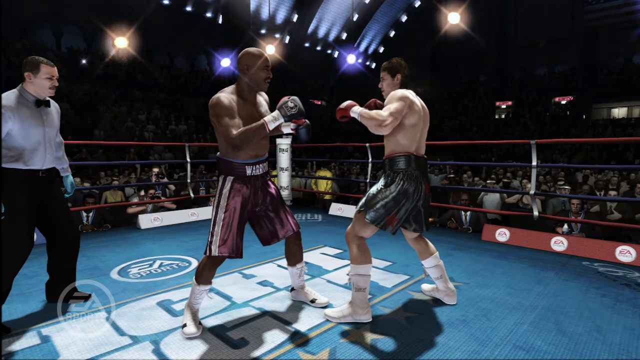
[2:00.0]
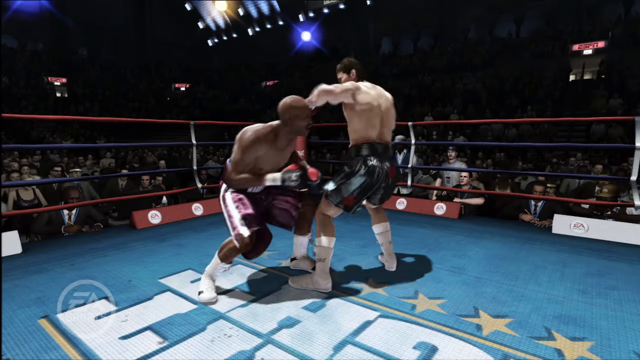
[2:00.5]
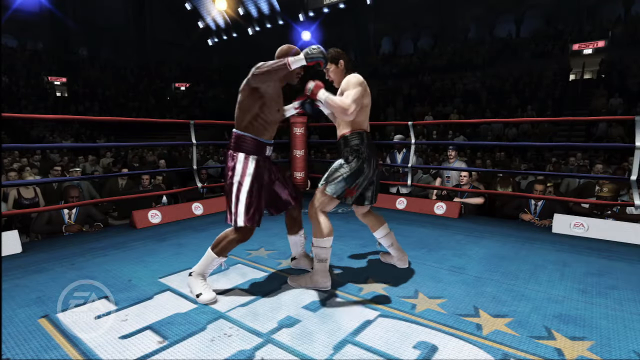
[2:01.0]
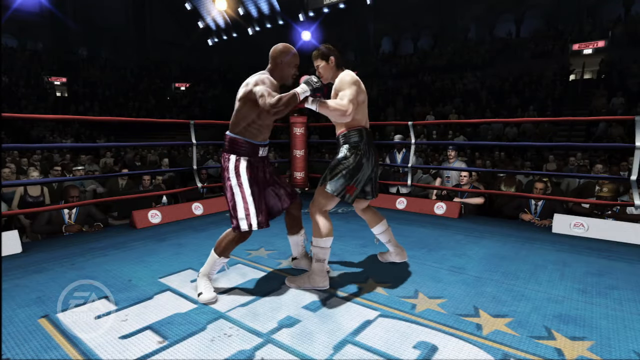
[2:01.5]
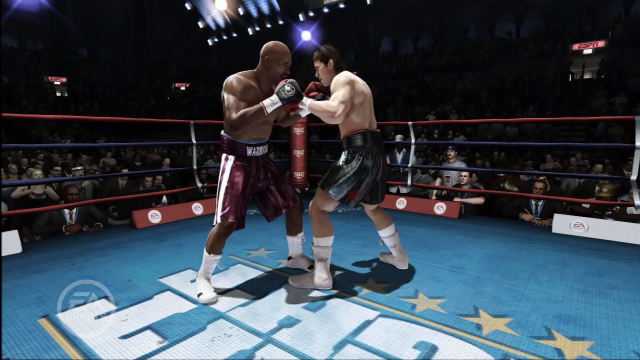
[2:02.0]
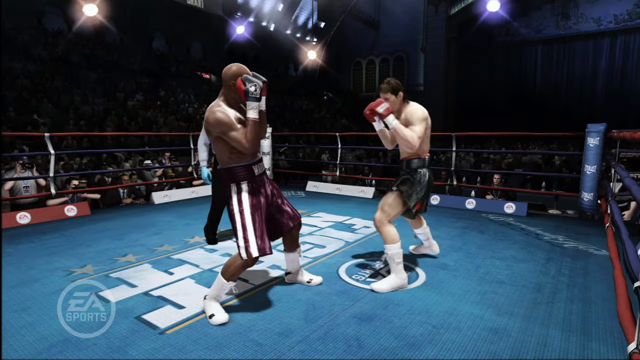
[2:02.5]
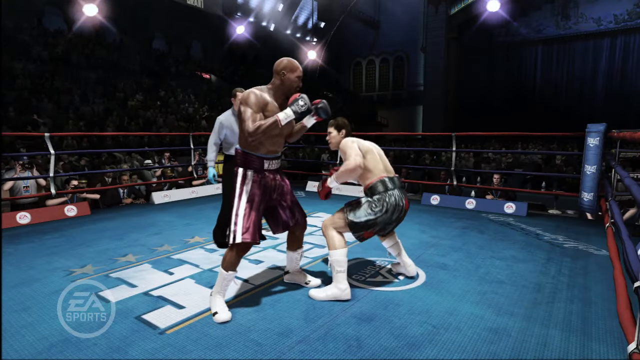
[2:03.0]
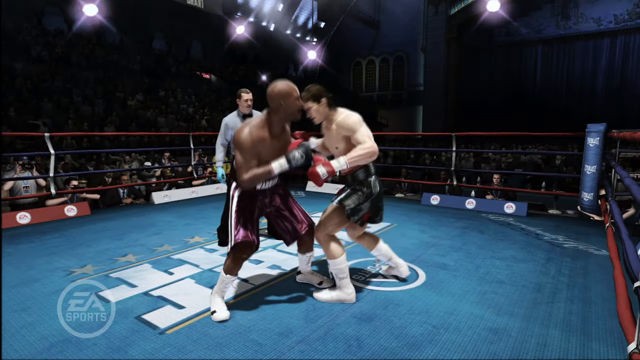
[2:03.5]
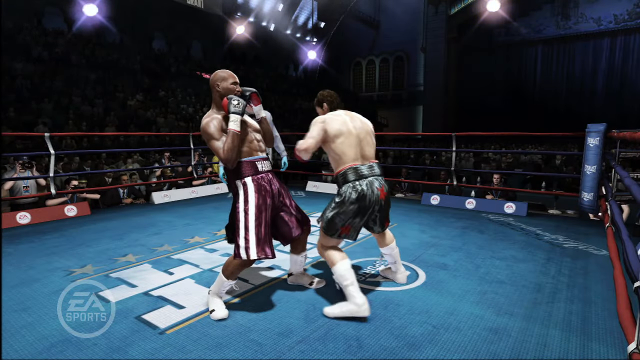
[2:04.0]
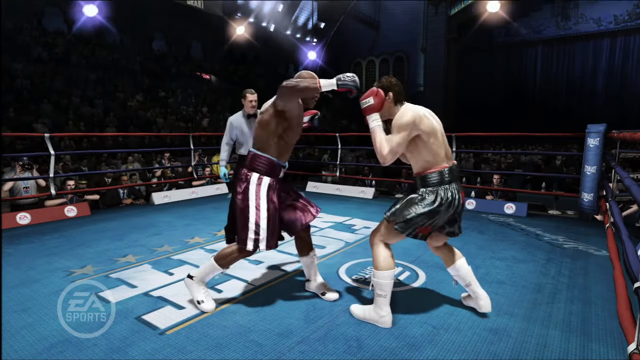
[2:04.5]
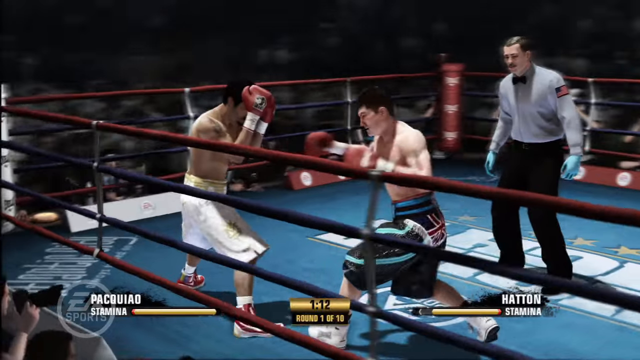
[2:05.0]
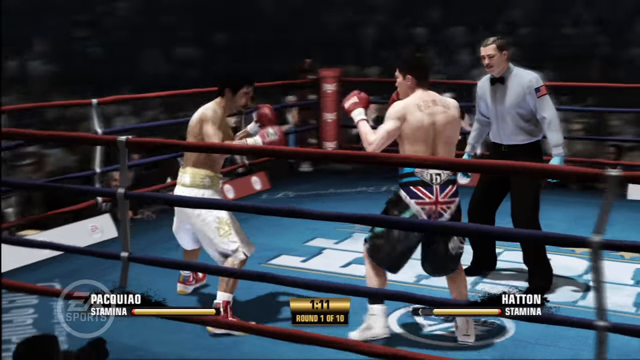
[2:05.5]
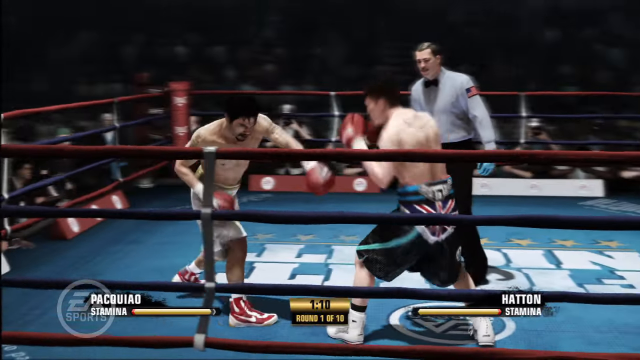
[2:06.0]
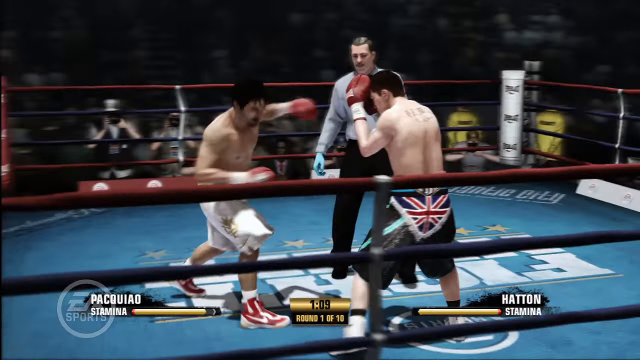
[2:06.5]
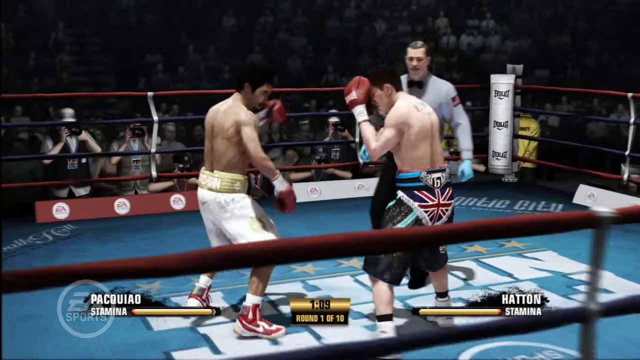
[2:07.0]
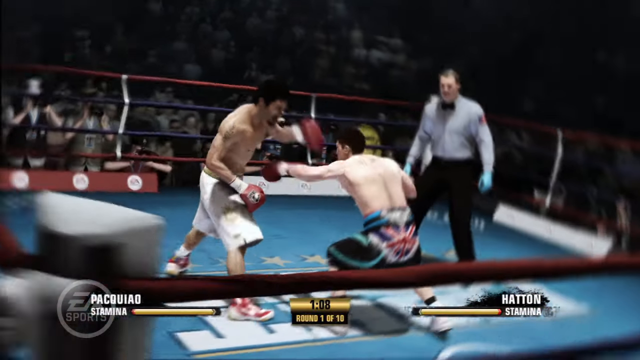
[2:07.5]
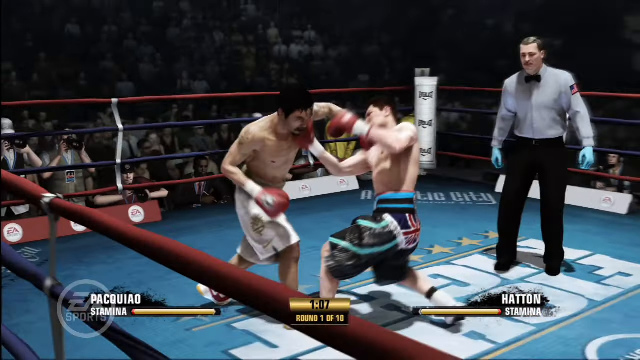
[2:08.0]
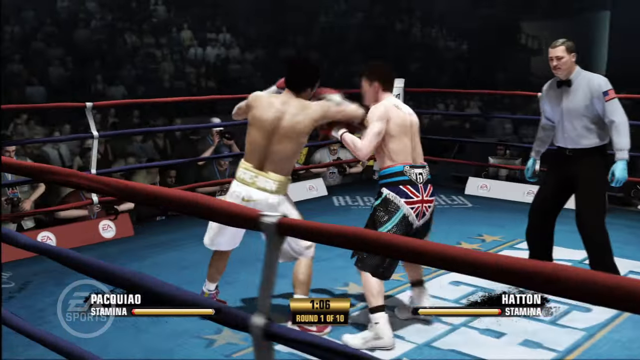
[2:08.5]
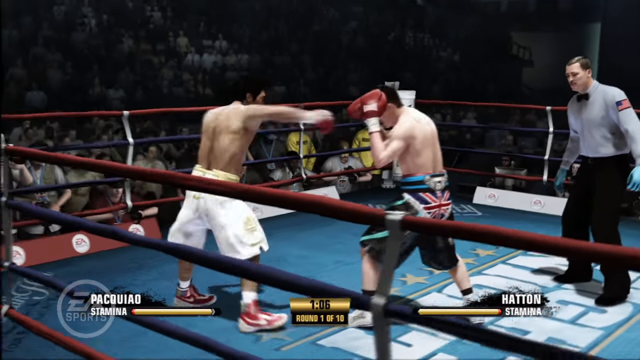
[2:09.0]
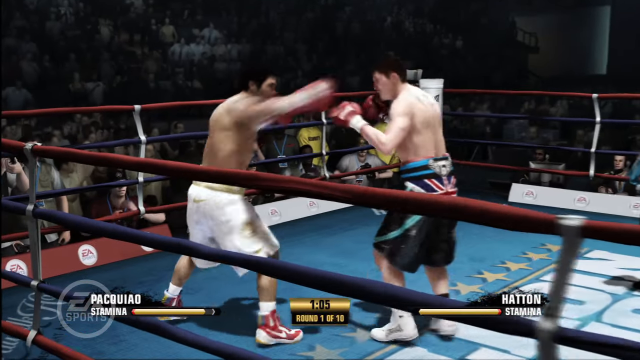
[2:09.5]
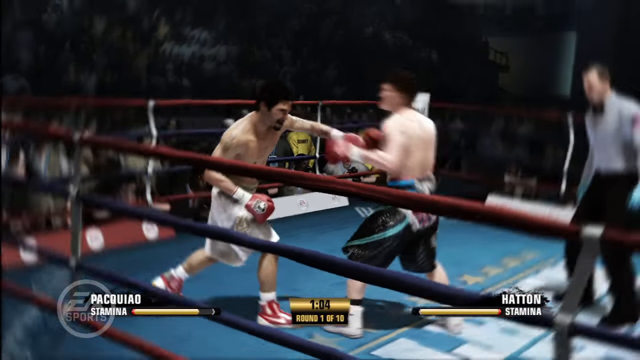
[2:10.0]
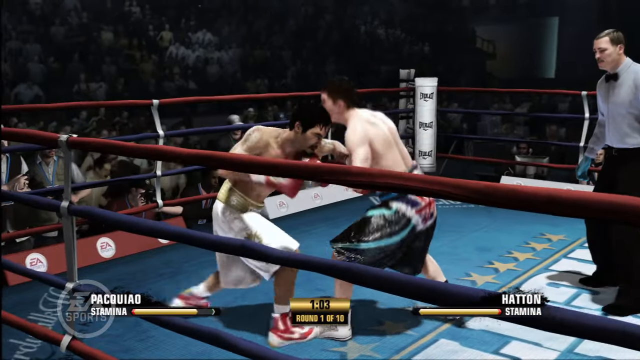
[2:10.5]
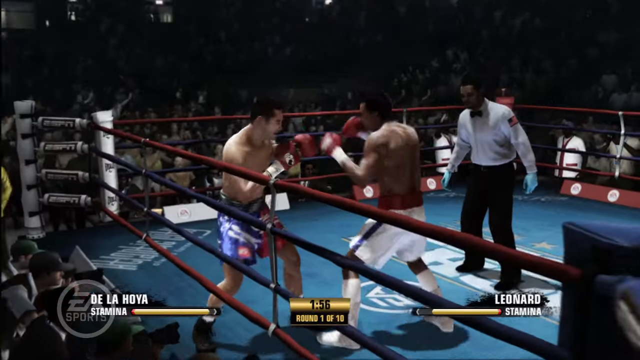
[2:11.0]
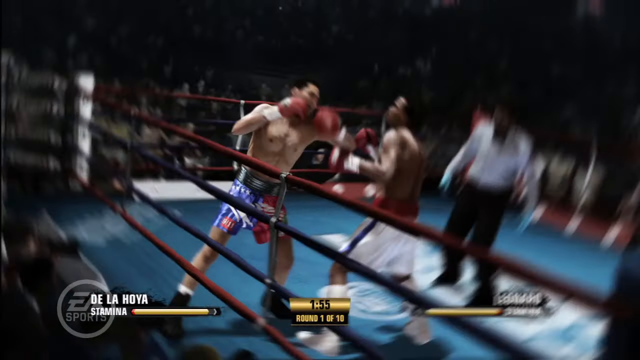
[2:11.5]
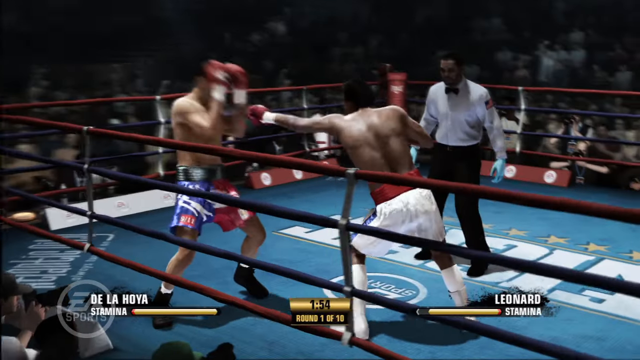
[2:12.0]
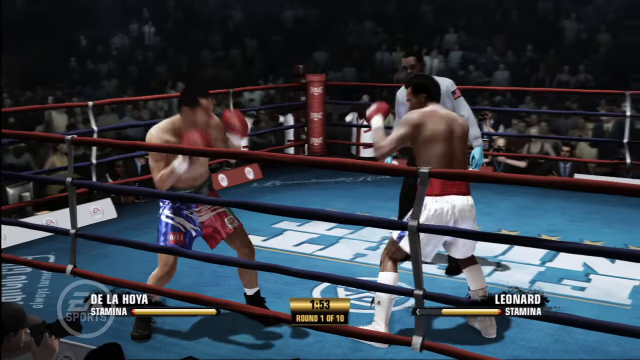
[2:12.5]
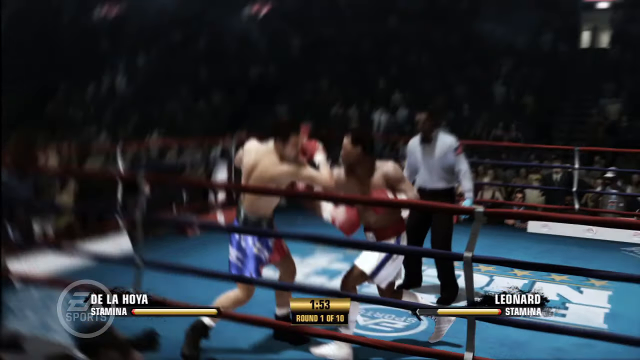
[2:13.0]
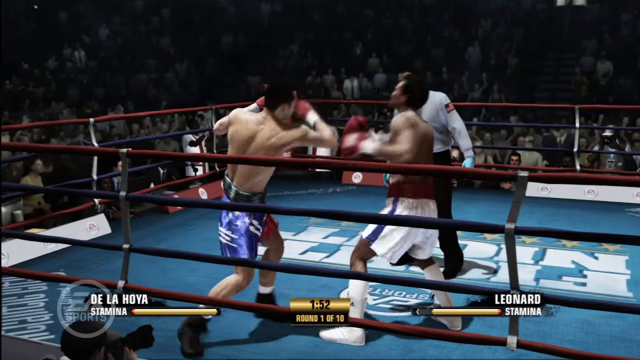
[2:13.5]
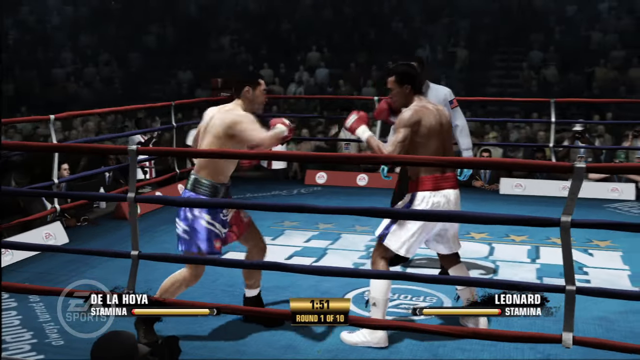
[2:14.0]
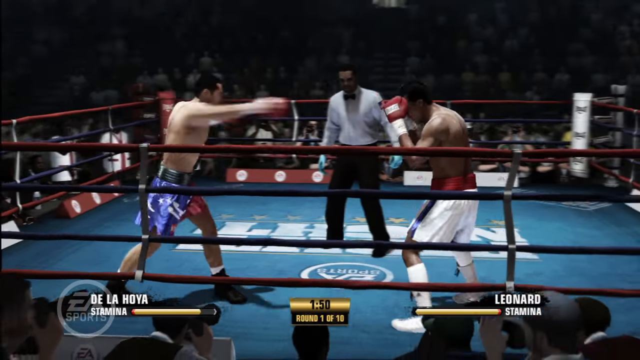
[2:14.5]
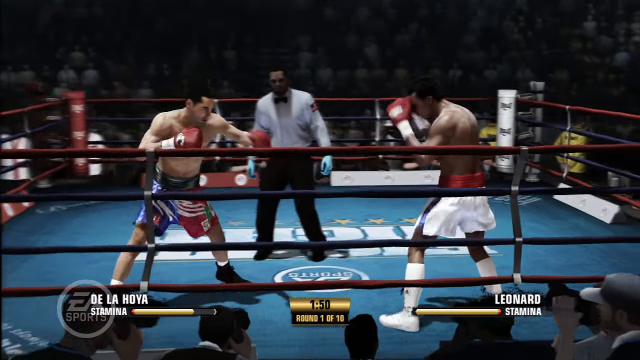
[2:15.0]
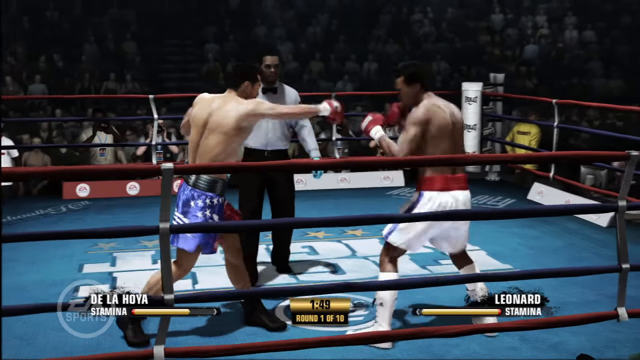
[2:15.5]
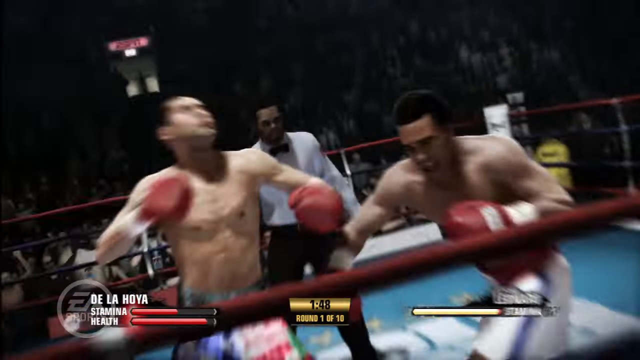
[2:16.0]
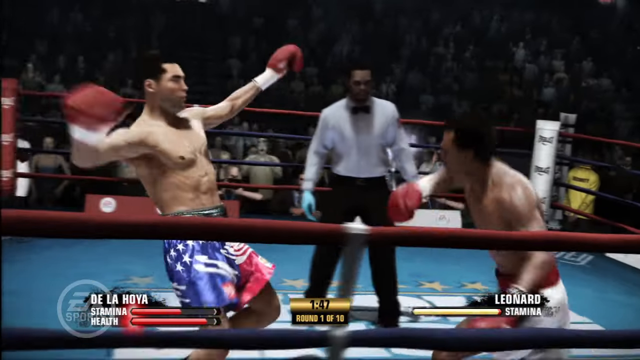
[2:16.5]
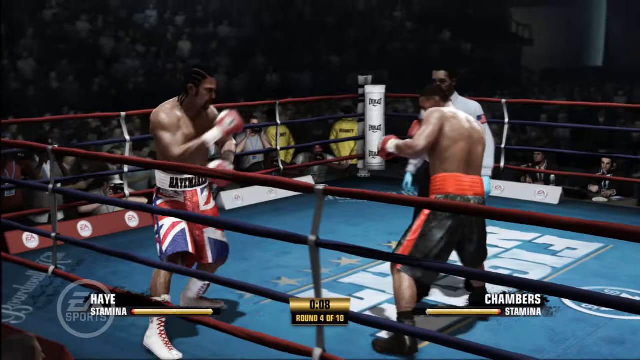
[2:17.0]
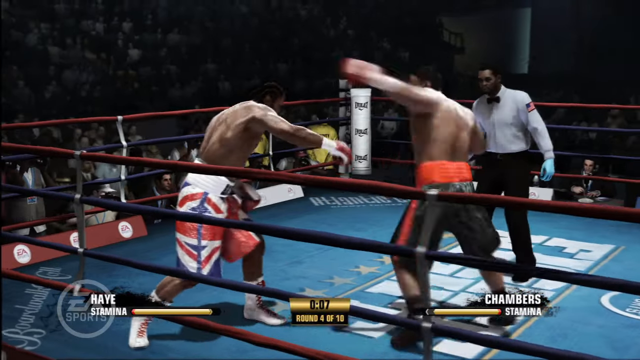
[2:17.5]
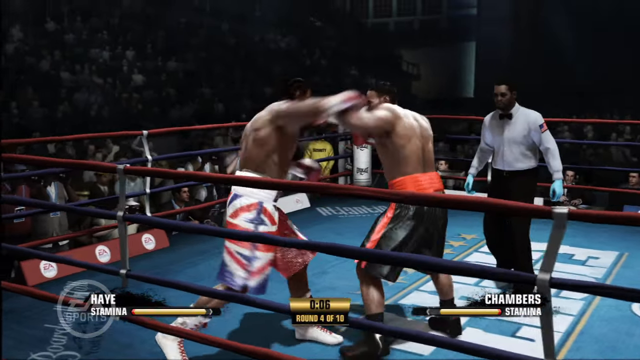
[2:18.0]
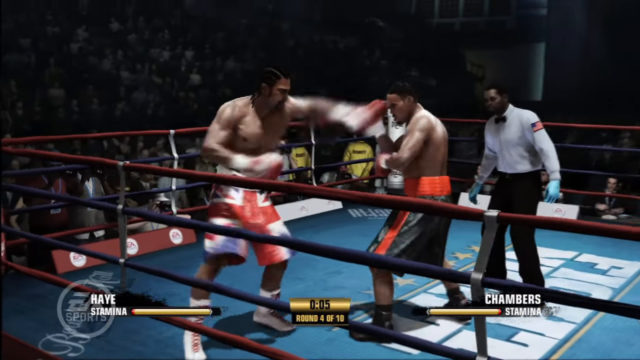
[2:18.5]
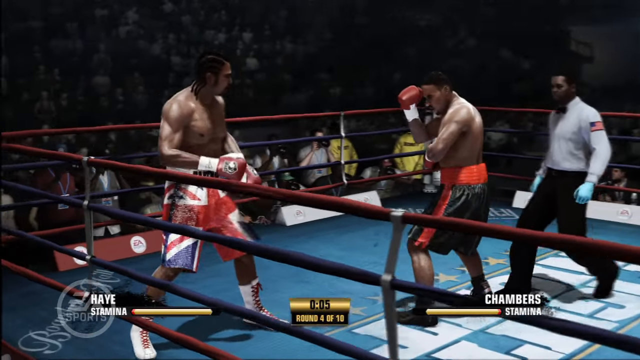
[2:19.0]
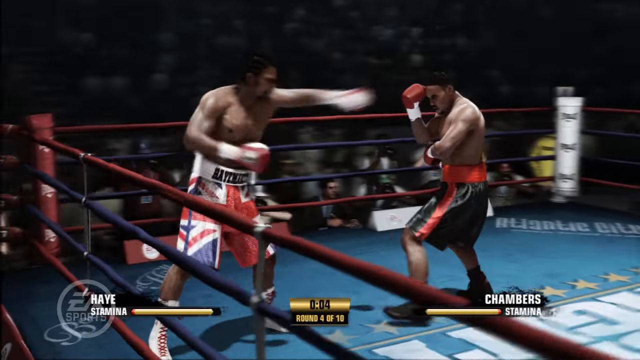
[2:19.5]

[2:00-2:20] Two players face each other: one in red pants with white stripes, white socks and white shoes, and the other in black pants with a red logo, white socks and white shoes. They throw punches and dodge each other's punches; the player in red pants appears to make contact once, but for the most part both dodge. Next, two more players fight, one wearing white pants and red shoes with white stripes. In the following pair, one fighter lands a few uppercuts but is then nearly knocked out and pushed back by the opponent's direct hit to the face. The video keeps cycling through different players and scenes of the matches. A different referee, a black man wearing the same outfit as the other referee, now guards the fight.